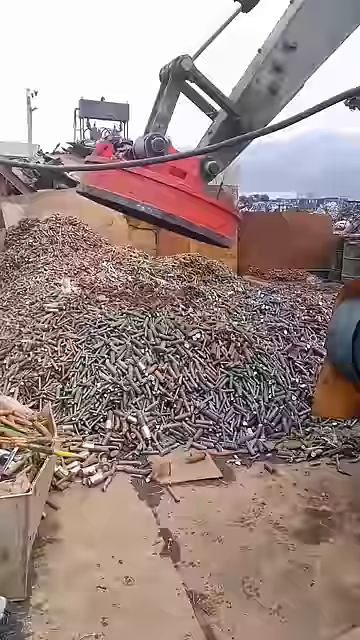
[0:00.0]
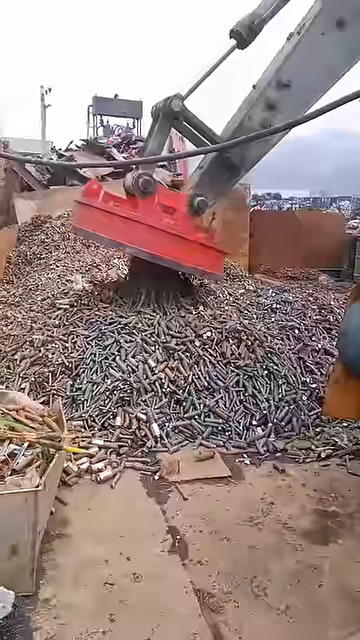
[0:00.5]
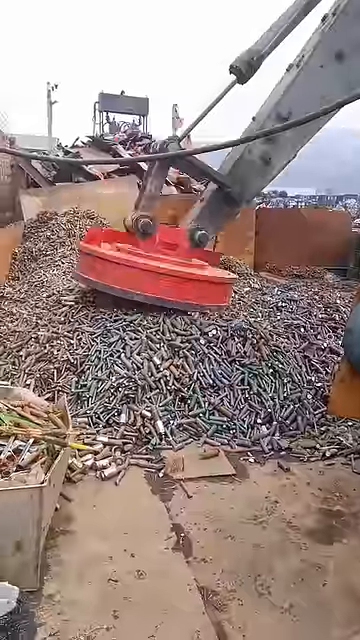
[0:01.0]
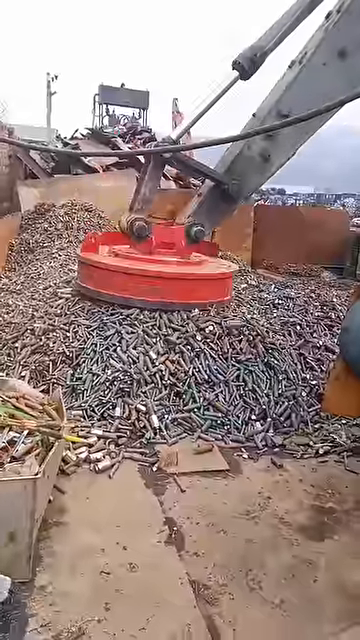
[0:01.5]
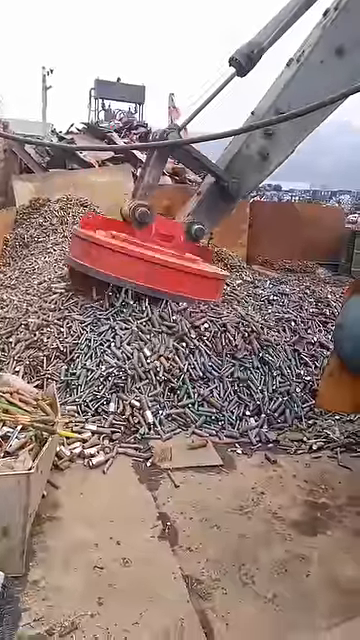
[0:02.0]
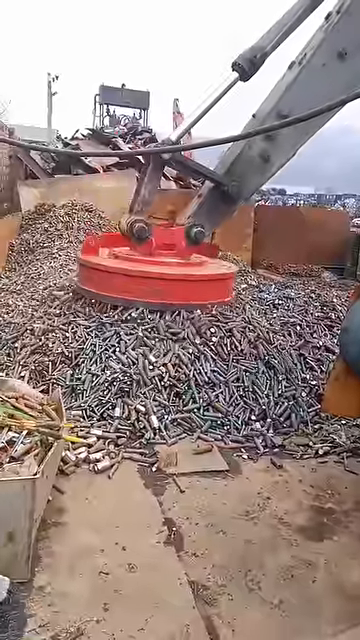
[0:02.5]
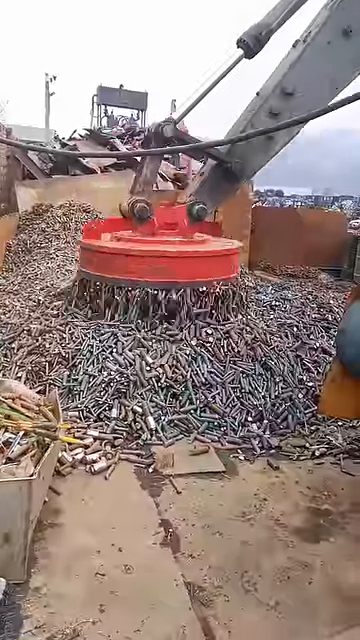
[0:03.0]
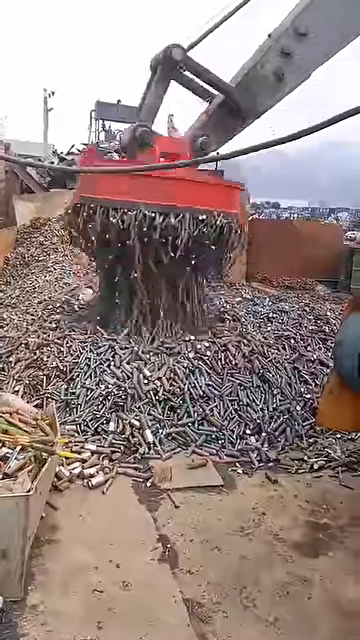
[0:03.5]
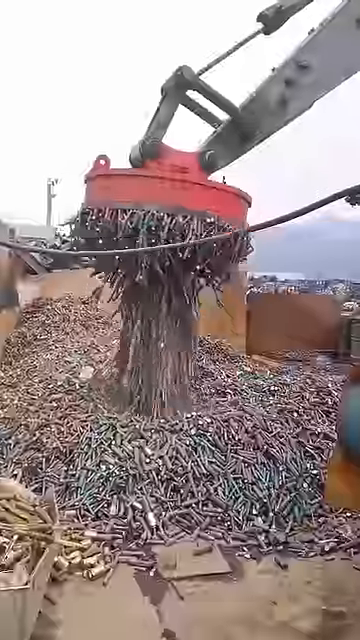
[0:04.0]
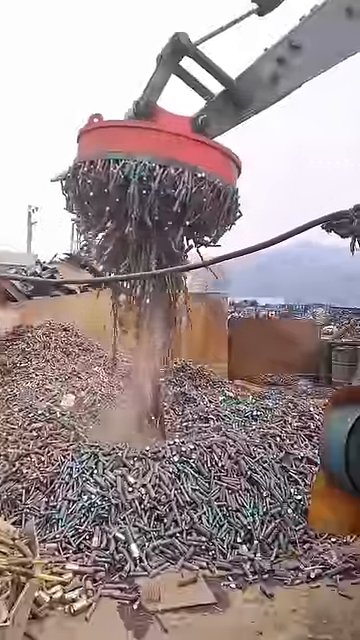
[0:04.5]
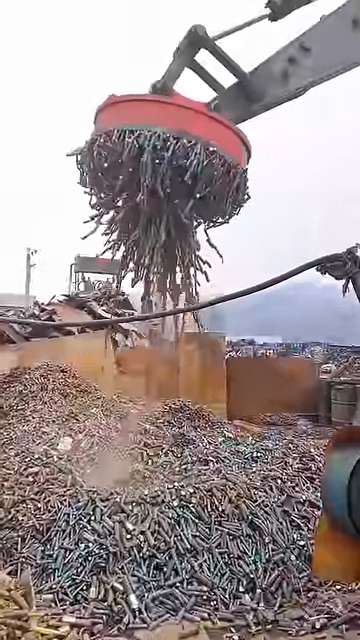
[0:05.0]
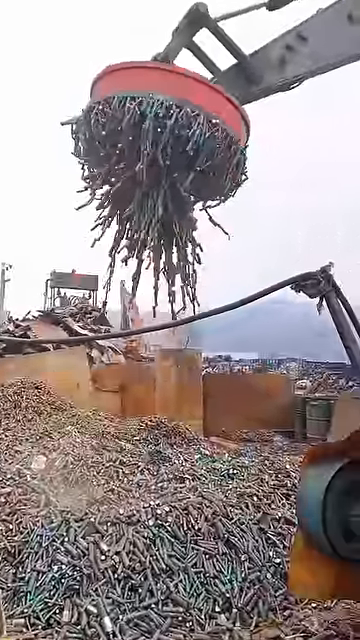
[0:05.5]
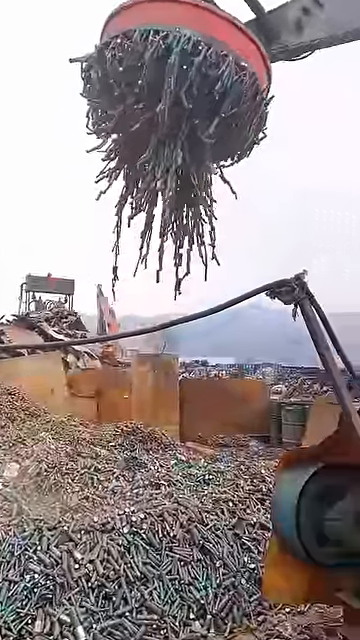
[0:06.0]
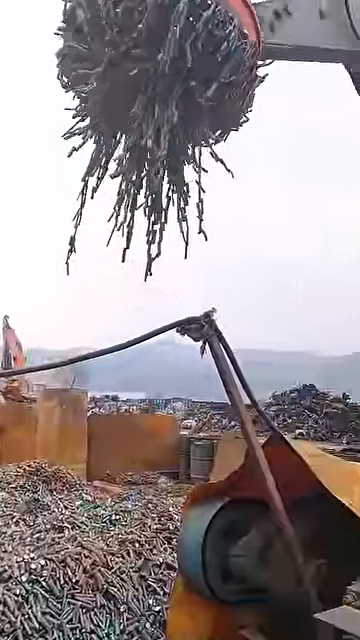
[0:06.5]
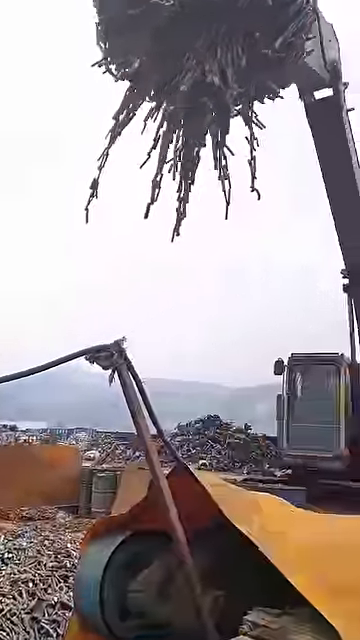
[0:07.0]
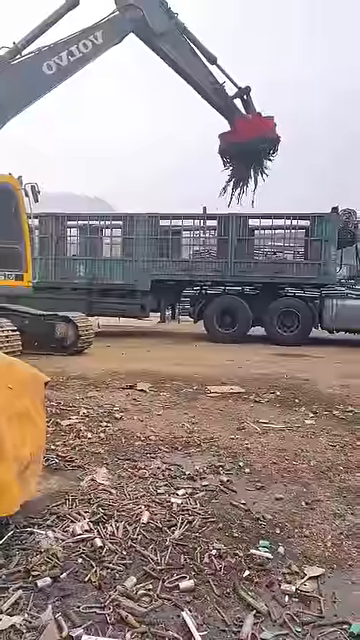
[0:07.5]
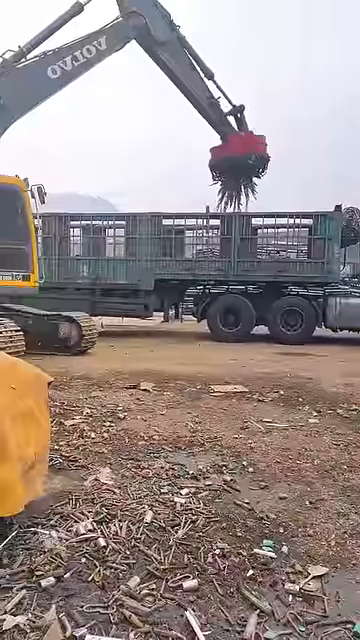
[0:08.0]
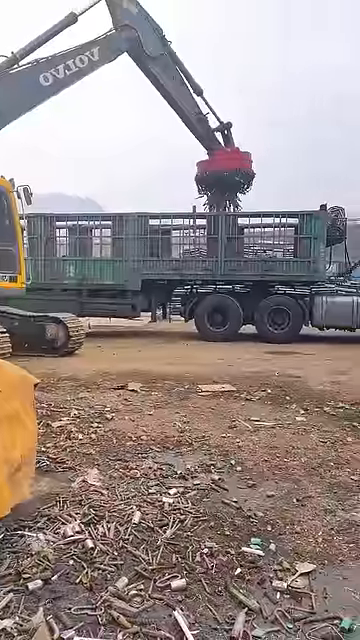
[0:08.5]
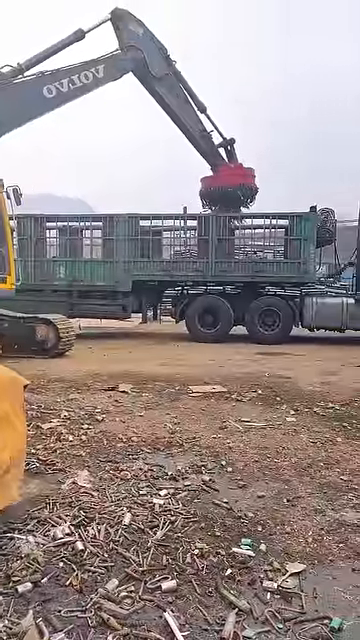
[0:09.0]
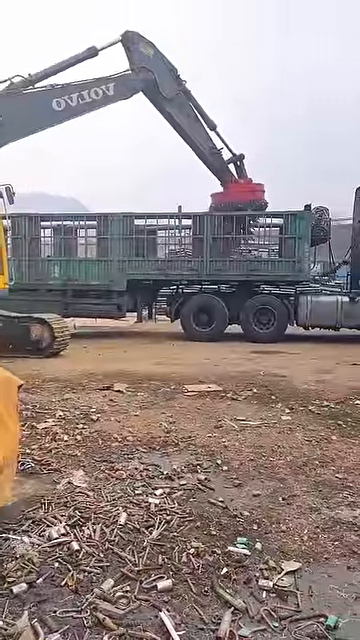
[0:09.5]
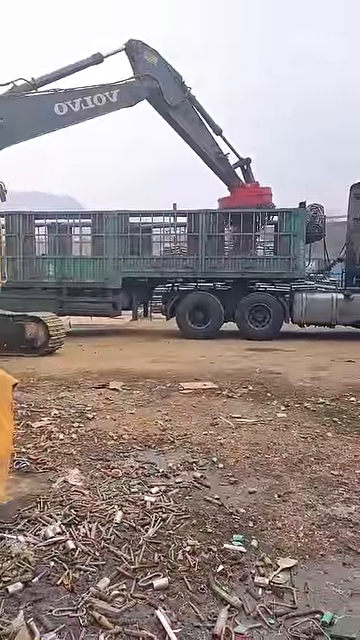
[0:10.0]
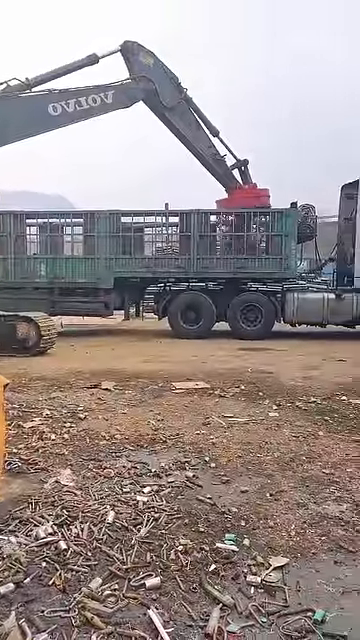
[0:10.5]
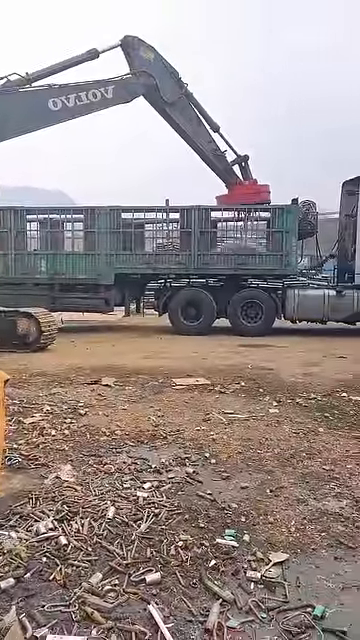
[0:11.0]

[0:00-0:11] A large electromagnet is shown. The electromagnet part itself, on the bottom, is dark gray, but the outside is spray-painted red, and a little bit of red is also on the machinery attached to it. The electromagnet is dipped down into a very large pile of metal. The metal looks to be all the same size: very small cylinders, mostly the same gray, though some are a little lighter gray. The magnet goes down into the pile, places itself, and rocks itself back and forth there for a while. It then lifts up, bringing up a very large mound of metal; the metal pieces all attract one another as the magnetism goes through them. A large amount of brown dust or dirt drops down from the pile. In the background are what look like pieces of a dock, with large wooden parts that go upwards, and a hill in the distance covered by a little bit of fog. Rusted brown metal parts are just behind the pile. The truck's magnet lifts up and swings towards the camera. The video then cuts to a different view of the metal being placed over a truck. The truck is green and has see-through parts on the sides. The electromagnet positions itself and then disengages the magnet so that the metal falls into the truck.